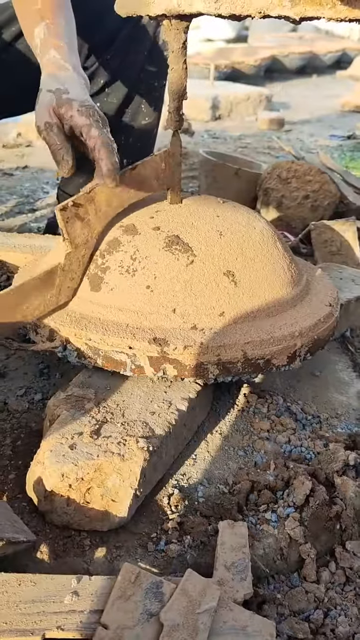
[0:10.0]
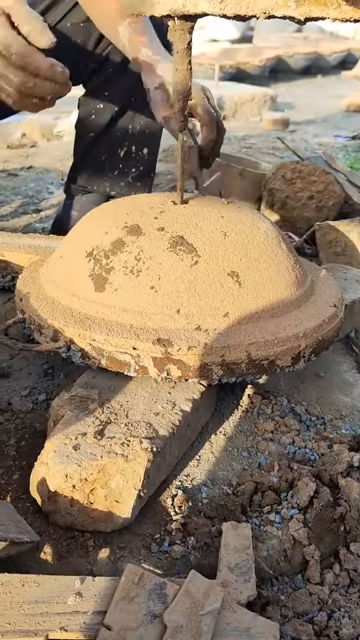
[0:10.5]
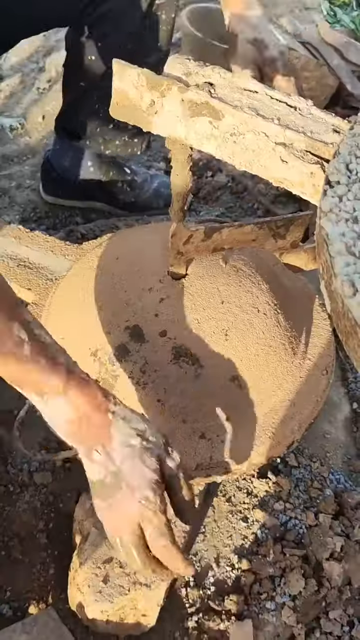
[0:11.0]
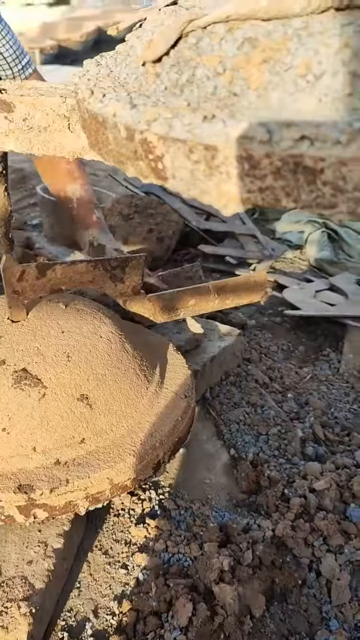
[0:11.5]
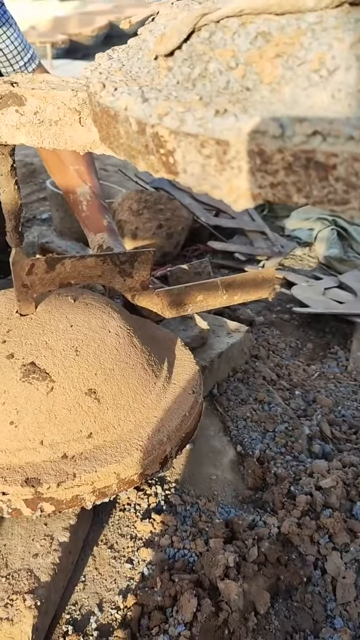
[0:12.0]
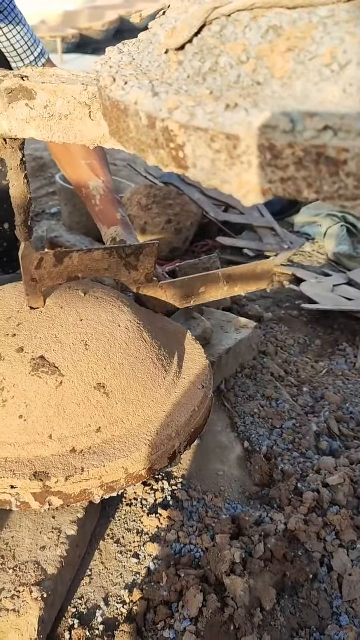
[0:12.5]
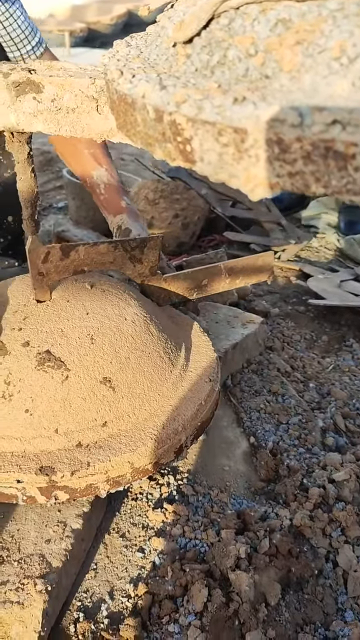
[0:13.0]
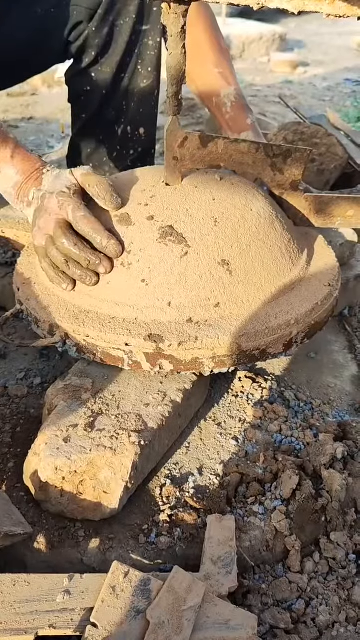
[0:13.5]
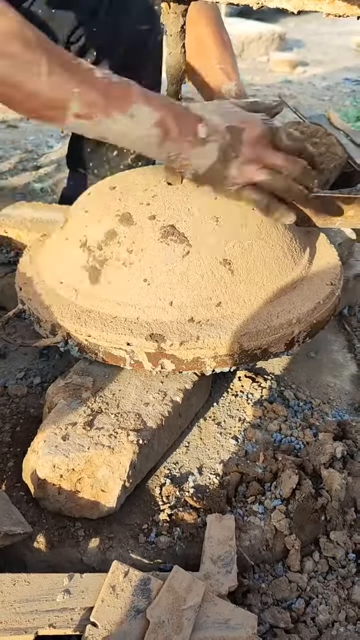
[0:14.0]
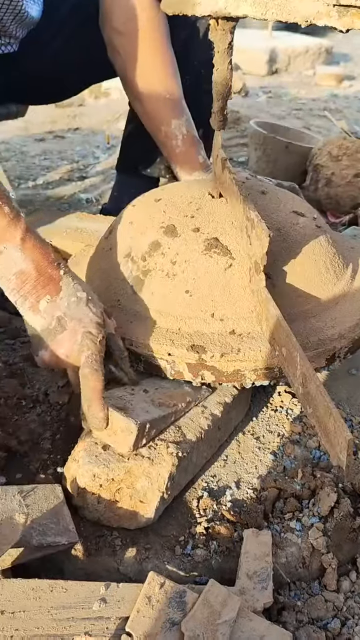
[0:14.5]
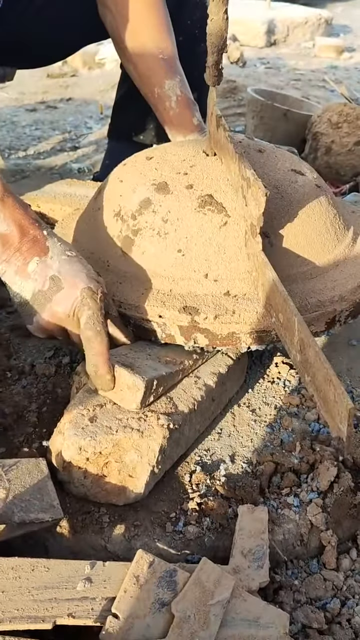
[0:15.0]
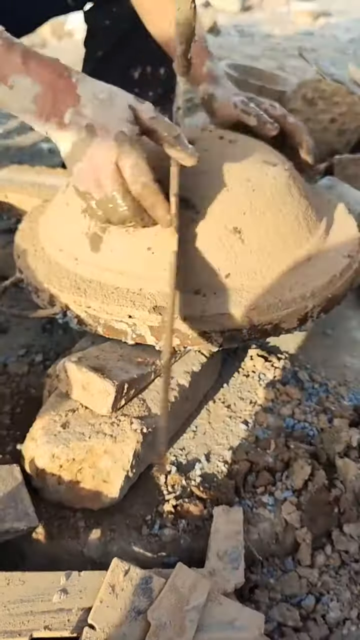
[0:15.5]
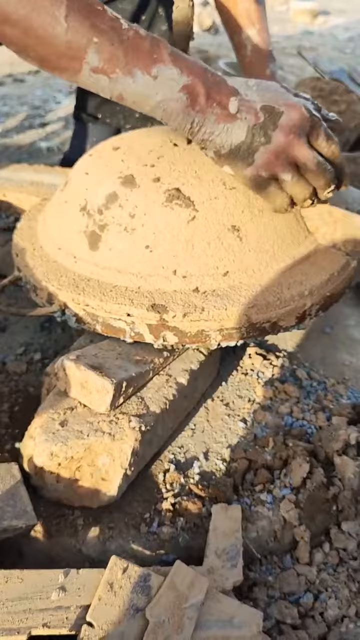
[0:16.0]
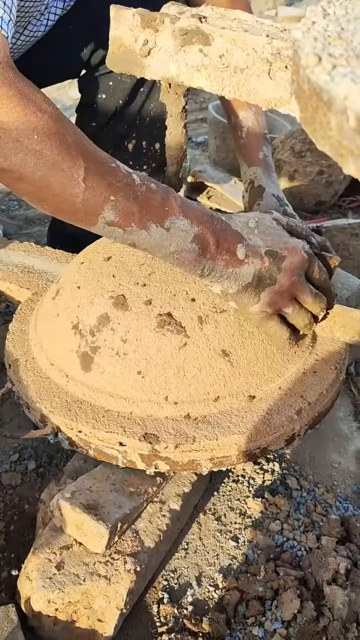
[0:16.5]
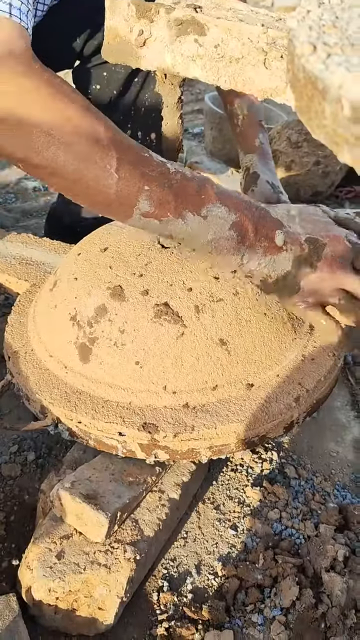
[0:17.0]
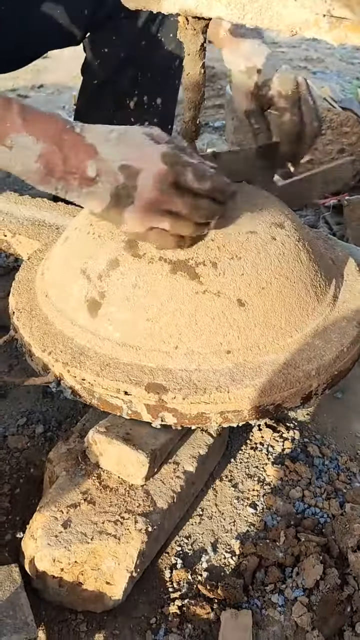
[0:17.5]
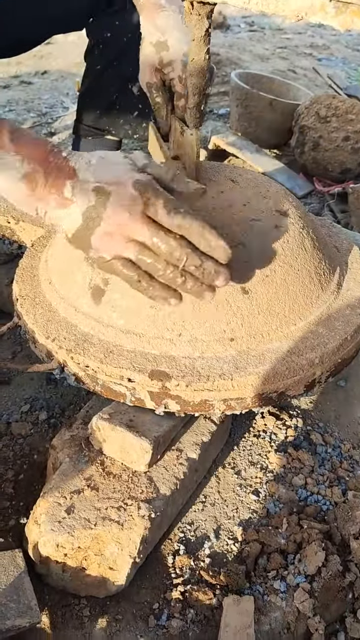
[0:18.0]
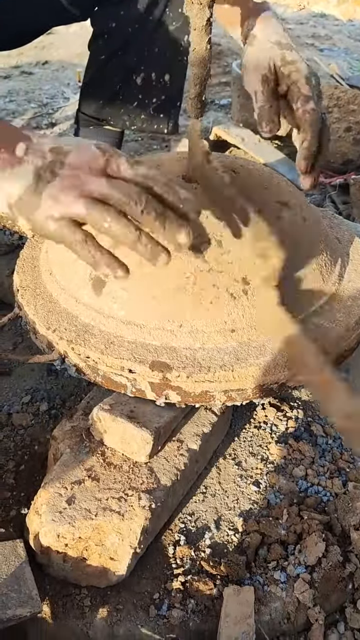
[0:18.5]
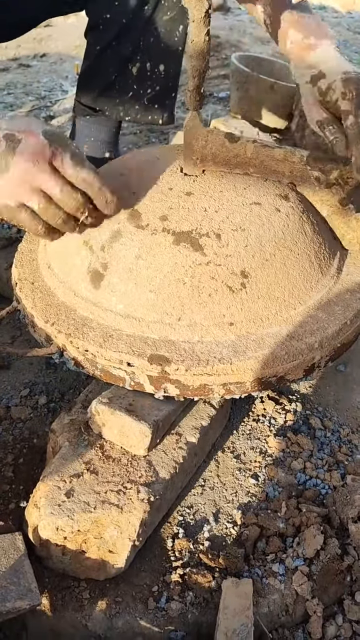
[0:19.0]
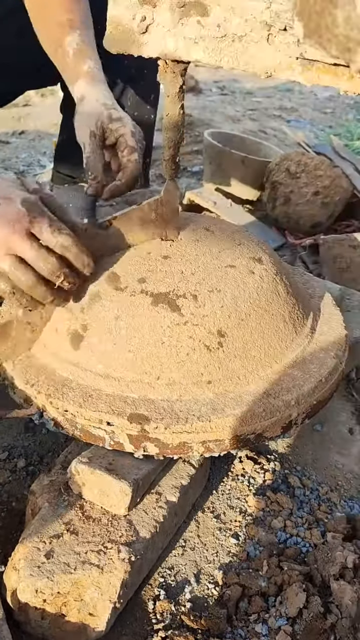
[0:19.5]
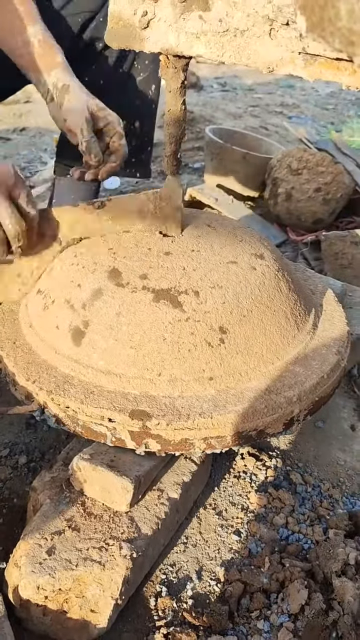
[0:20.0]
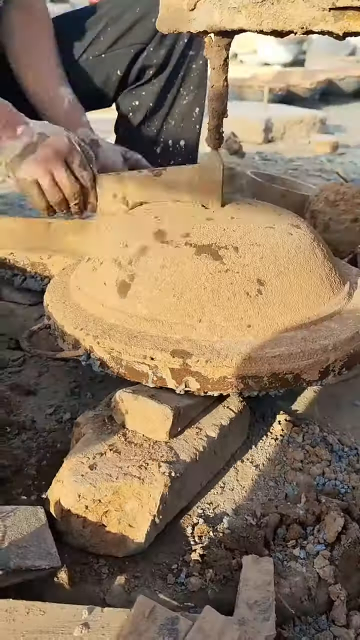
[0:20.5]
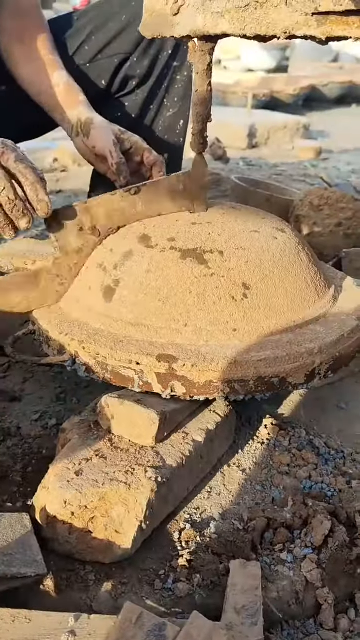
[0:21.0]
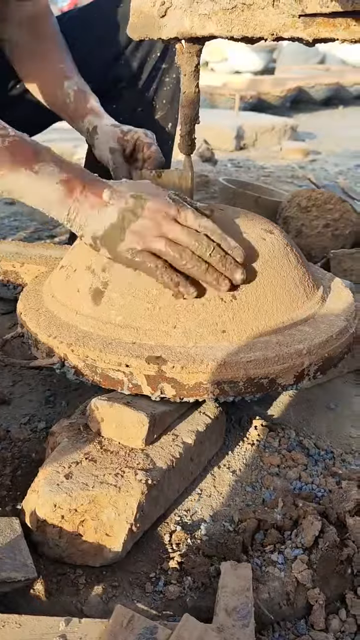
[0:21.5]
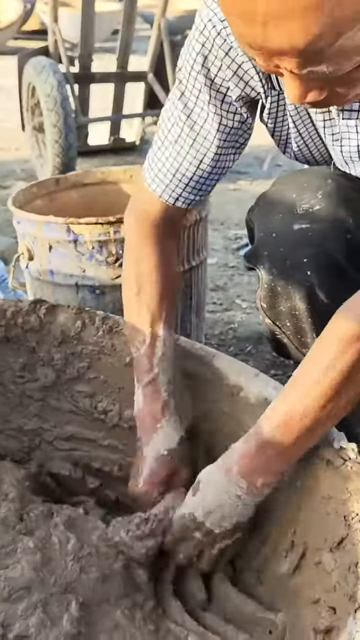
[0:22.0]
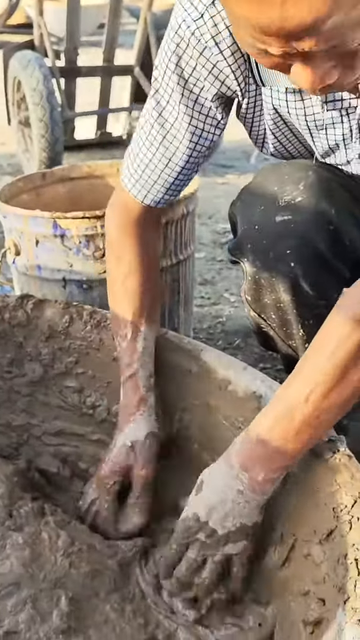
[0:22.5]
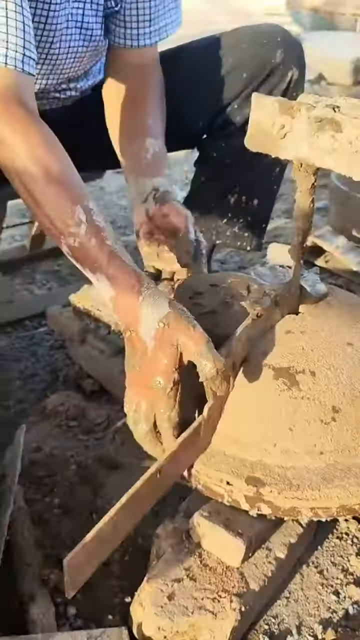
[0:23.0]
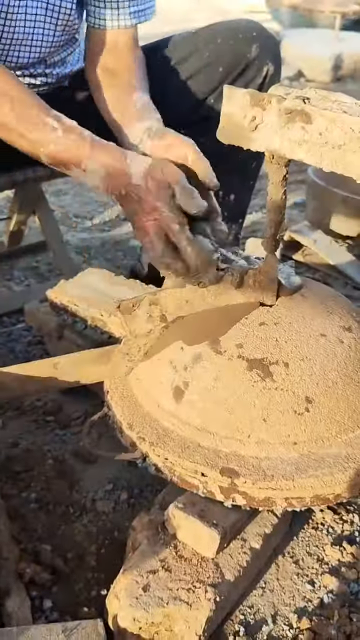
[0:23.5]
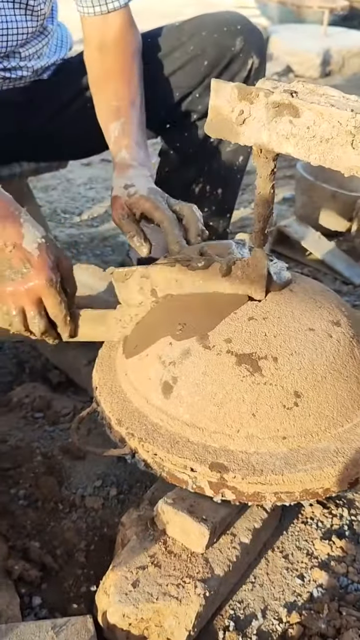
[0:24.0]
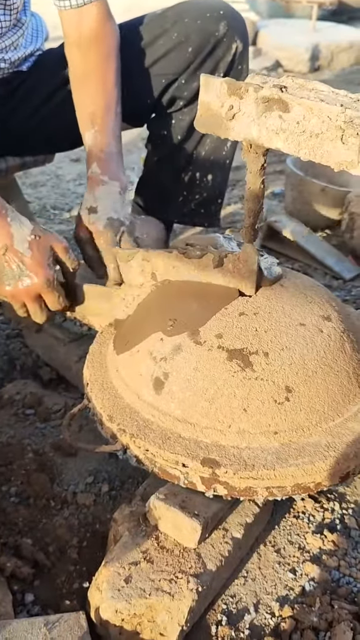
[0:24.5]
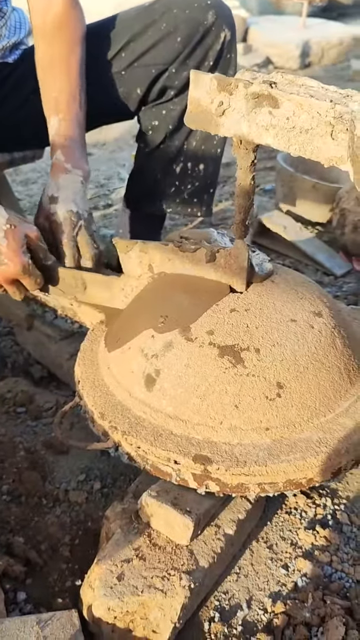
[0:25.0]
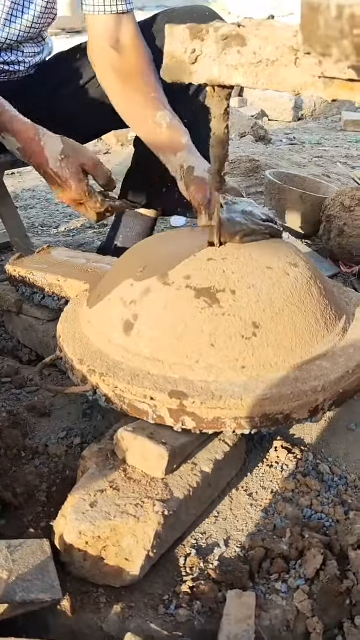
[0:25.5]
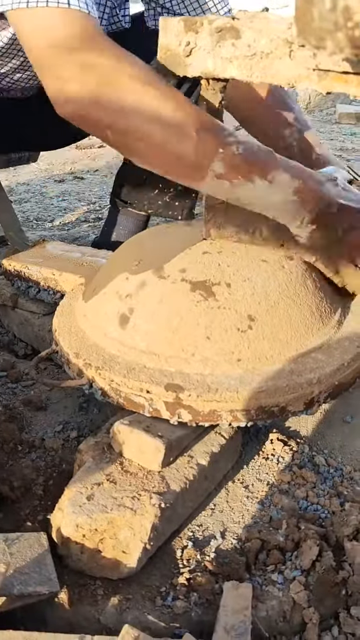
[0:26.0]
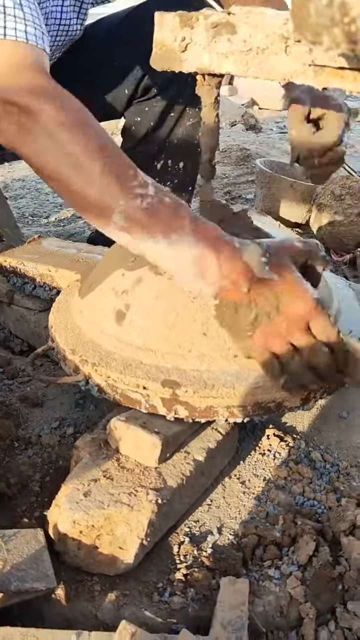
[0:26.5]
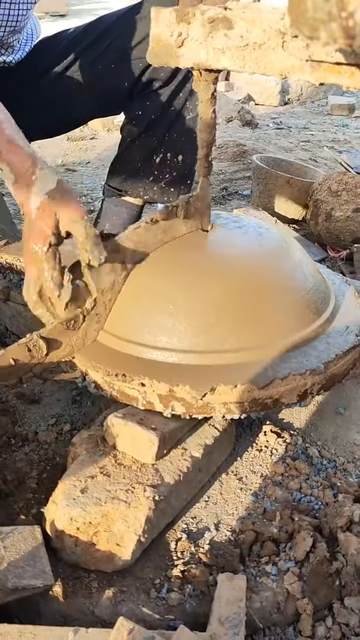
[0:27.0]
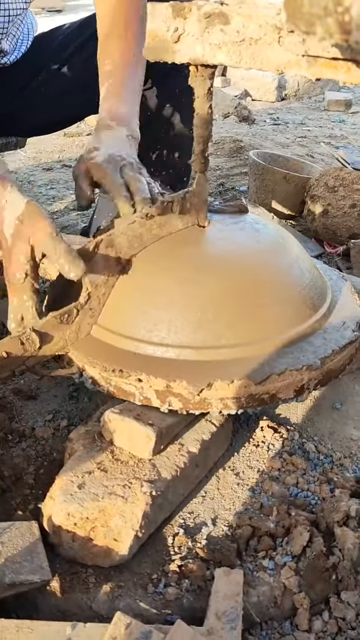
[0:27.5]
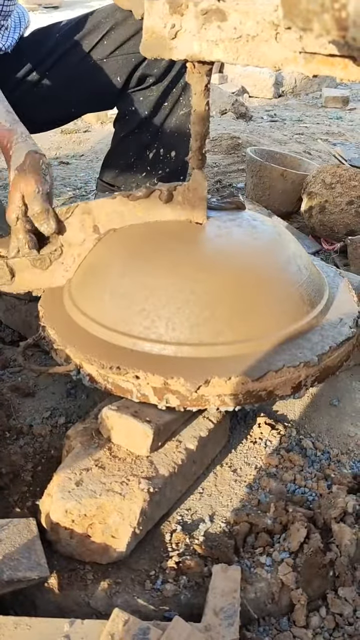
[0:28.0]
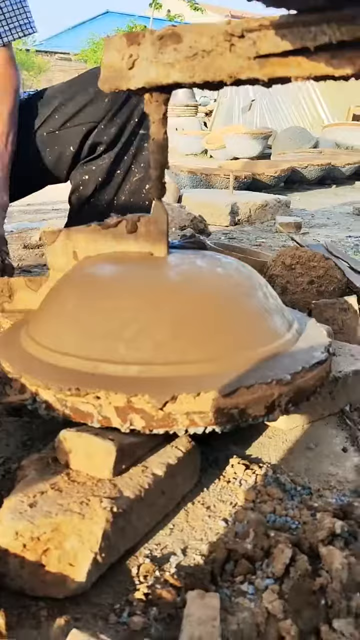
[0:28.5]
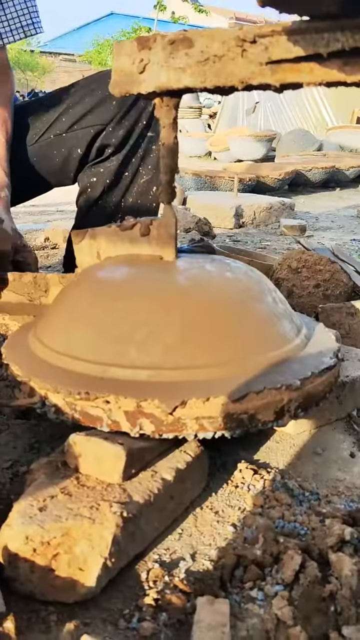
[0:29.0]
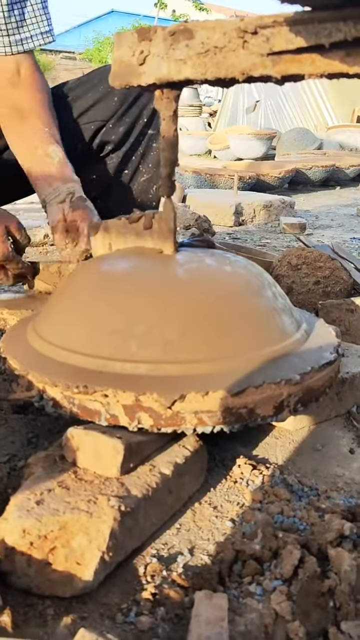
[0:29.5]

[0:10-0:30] The man's hands are covered in mud, there are pebbles everywhere, and the work site is a little messy. He seems to wedge something under the structure to make it taller so the protractor apparatus is more flush as it turns around the surface. He spins it clockwise, apparently to shape it or make it smoother. He wears black slacks and a white shirt with blue and black stripes in a kind of plaid design. He reaches into what looks like a wheelbarrow holding a lot of clay or cement, stirs it with his fingers, puts some on top of the bell-shaped structure, and again turns the tool clockwise to smooth the surface.